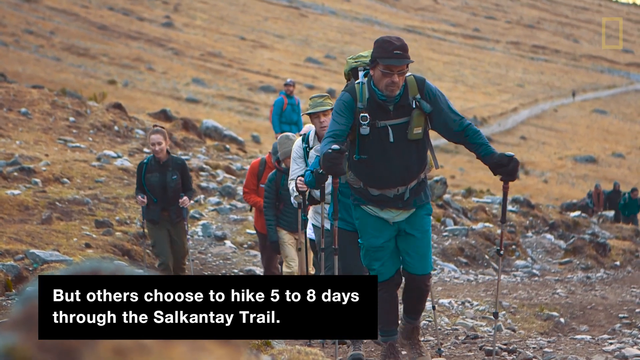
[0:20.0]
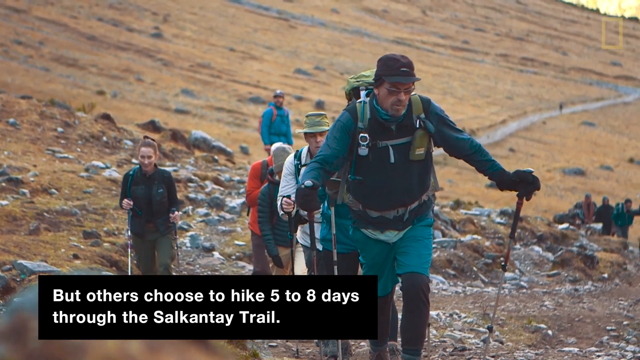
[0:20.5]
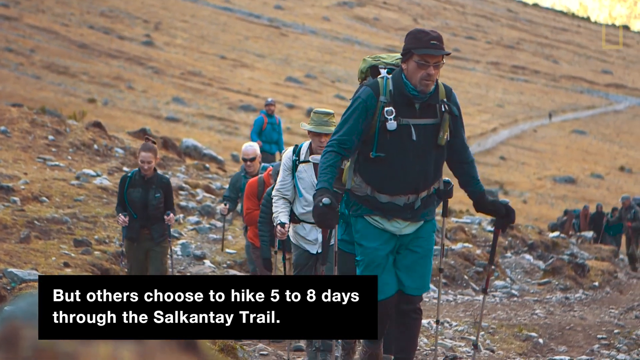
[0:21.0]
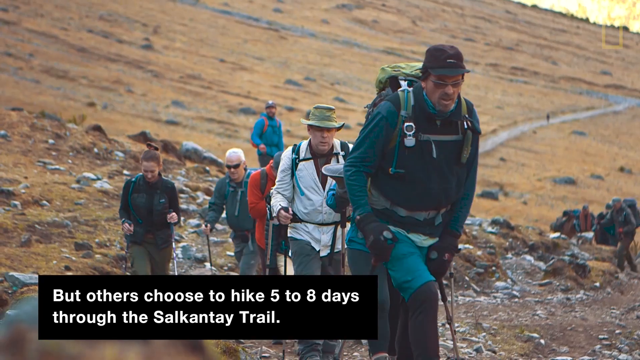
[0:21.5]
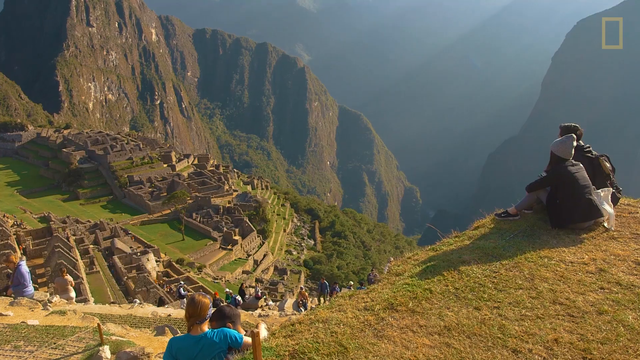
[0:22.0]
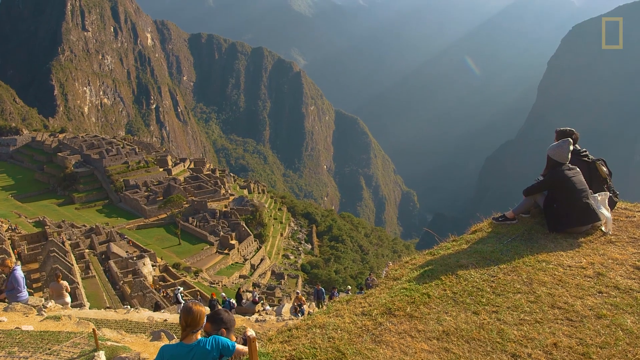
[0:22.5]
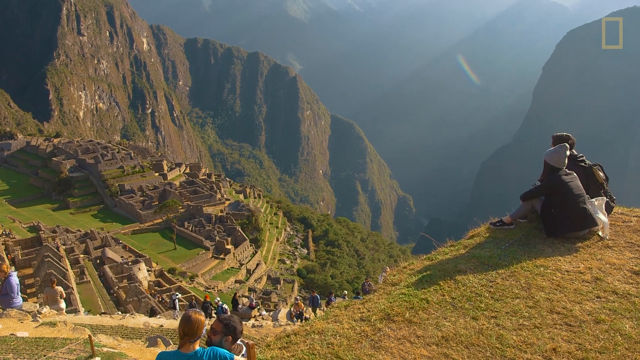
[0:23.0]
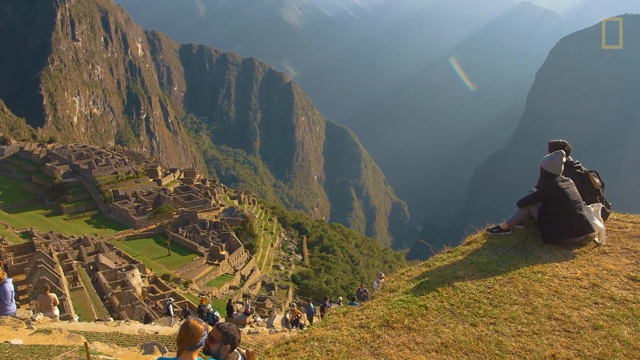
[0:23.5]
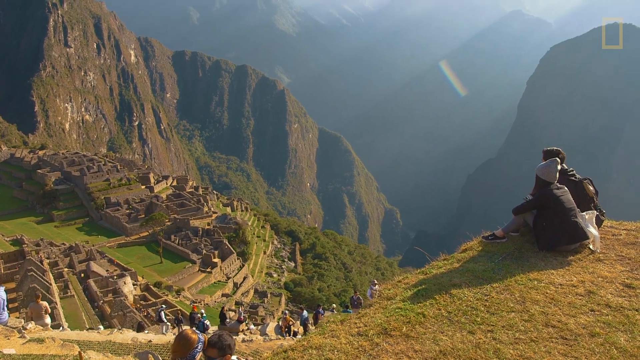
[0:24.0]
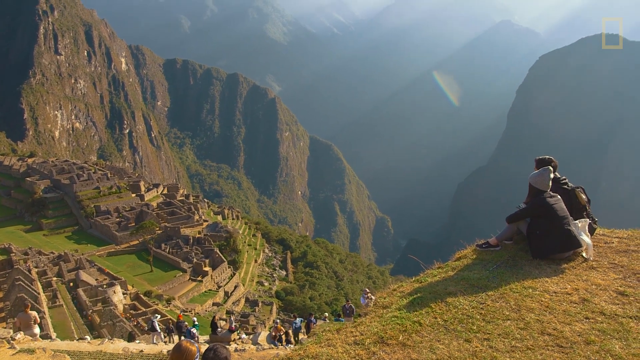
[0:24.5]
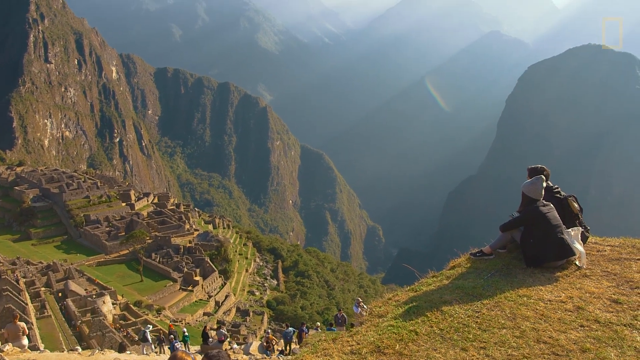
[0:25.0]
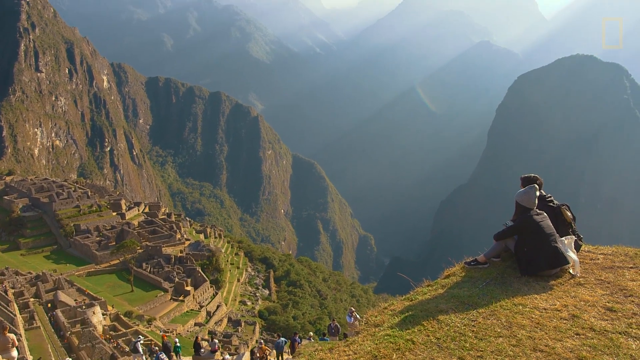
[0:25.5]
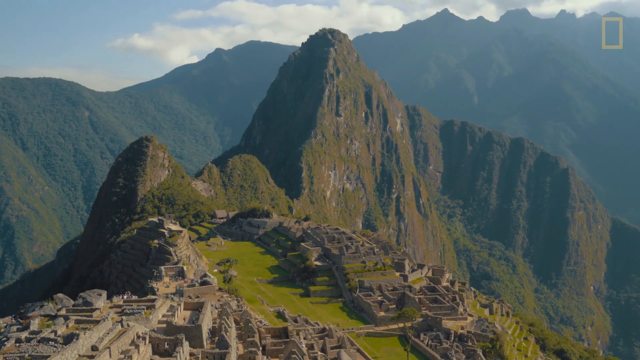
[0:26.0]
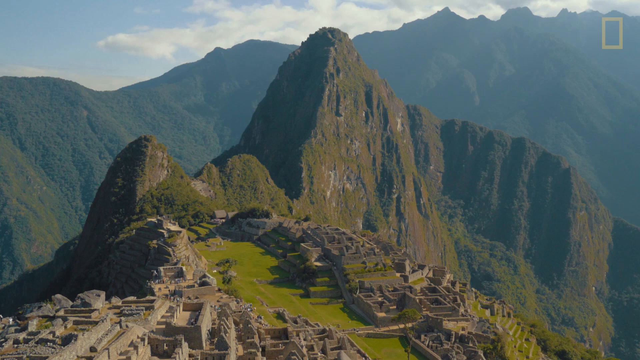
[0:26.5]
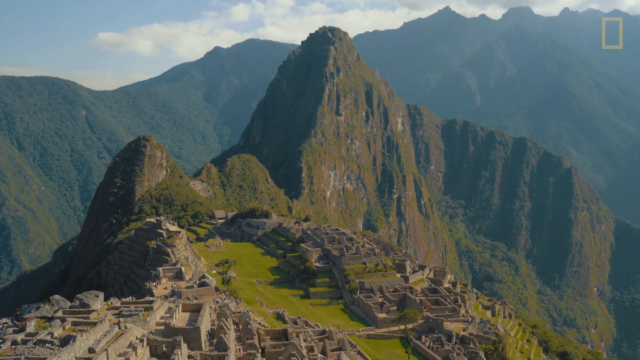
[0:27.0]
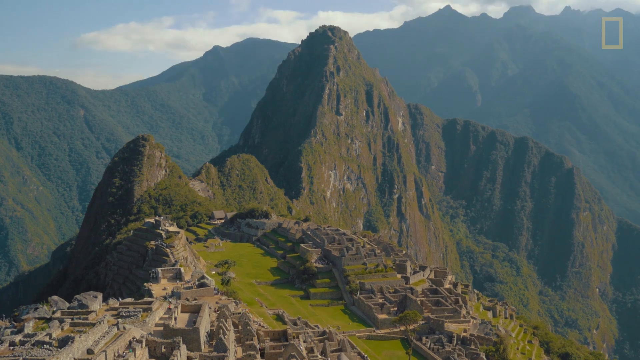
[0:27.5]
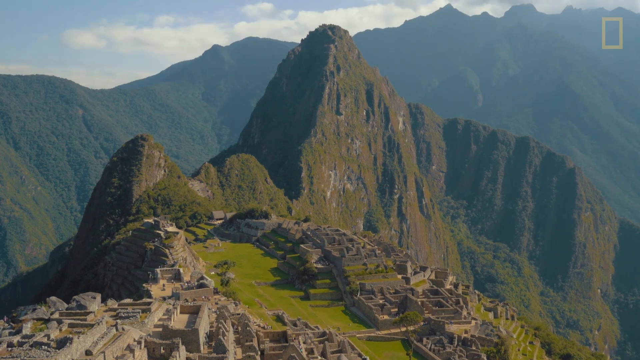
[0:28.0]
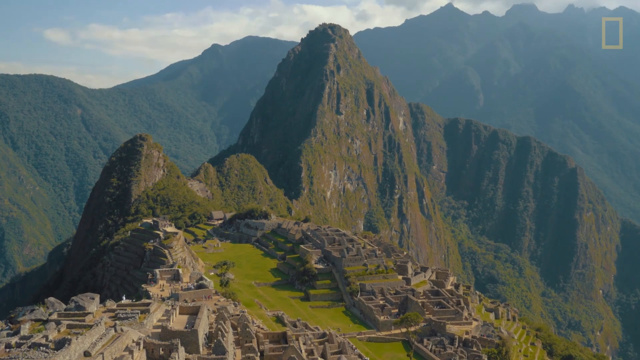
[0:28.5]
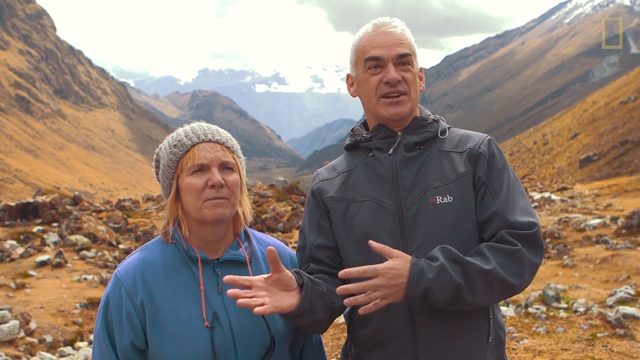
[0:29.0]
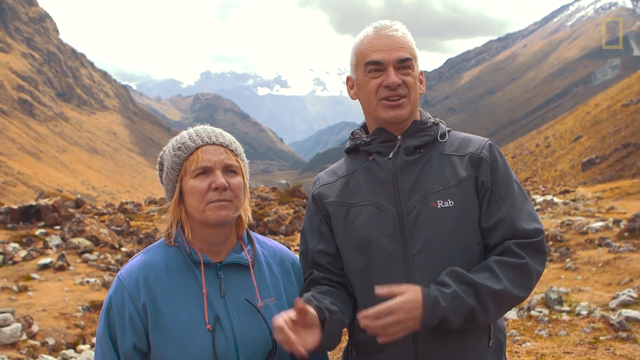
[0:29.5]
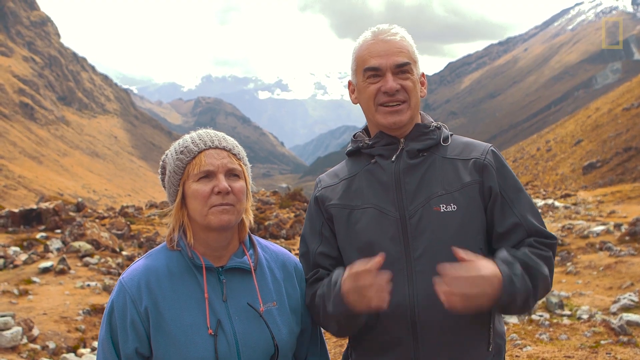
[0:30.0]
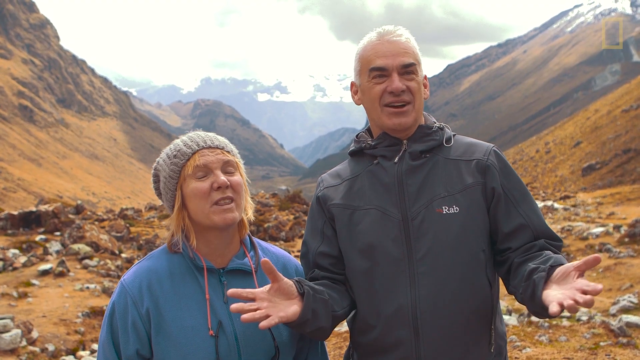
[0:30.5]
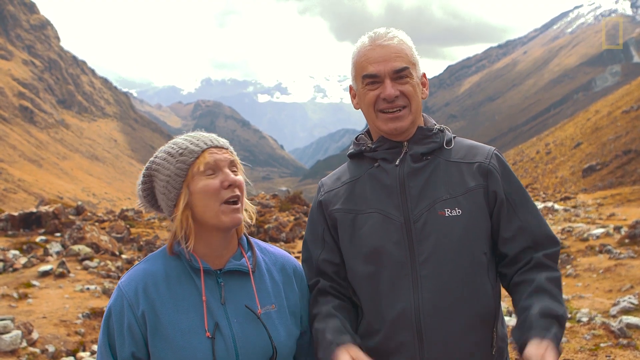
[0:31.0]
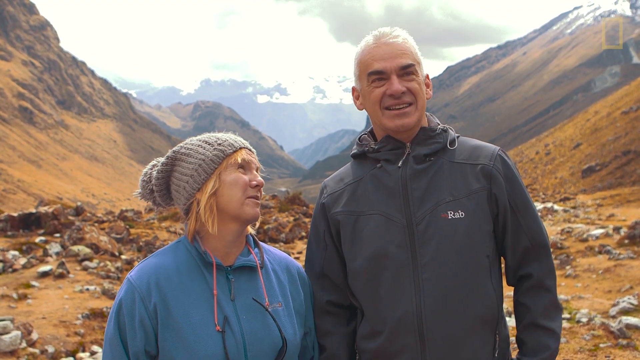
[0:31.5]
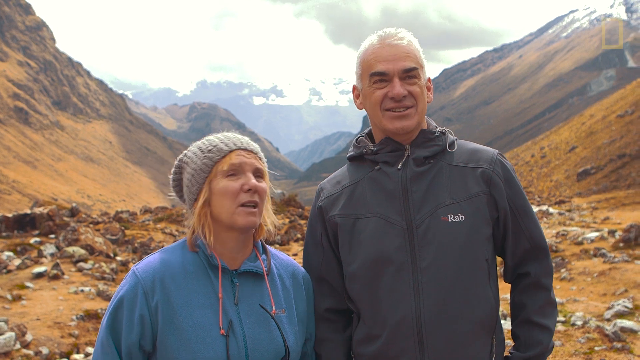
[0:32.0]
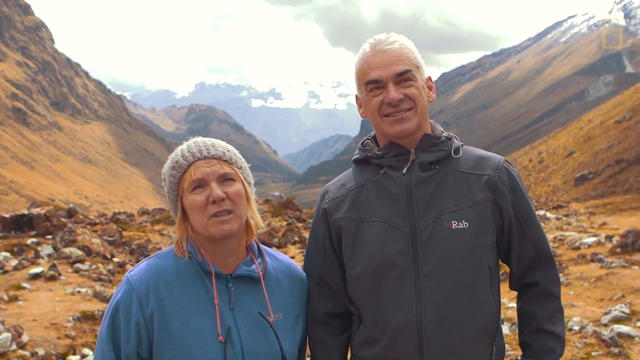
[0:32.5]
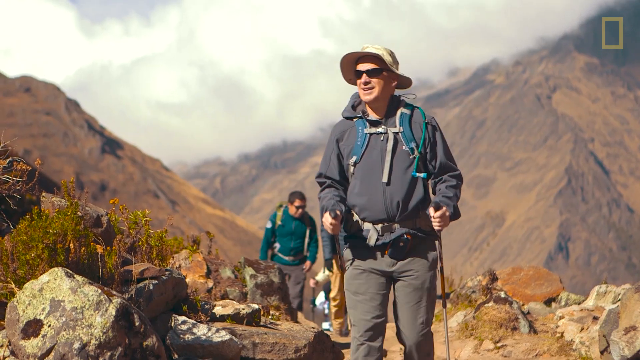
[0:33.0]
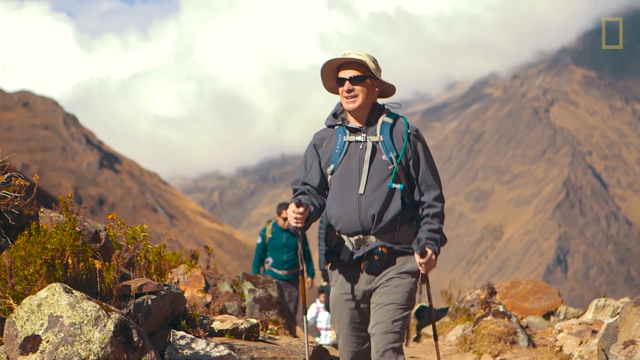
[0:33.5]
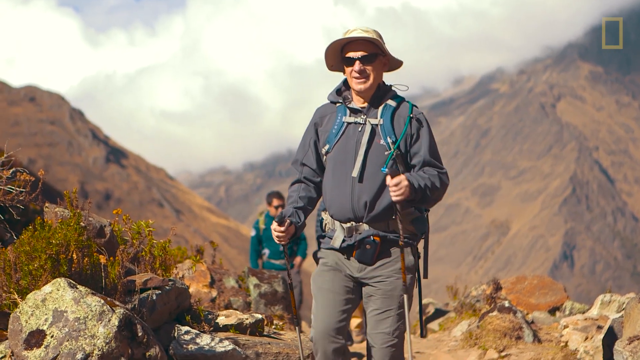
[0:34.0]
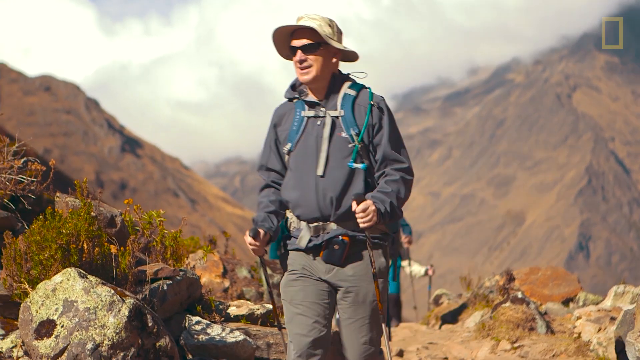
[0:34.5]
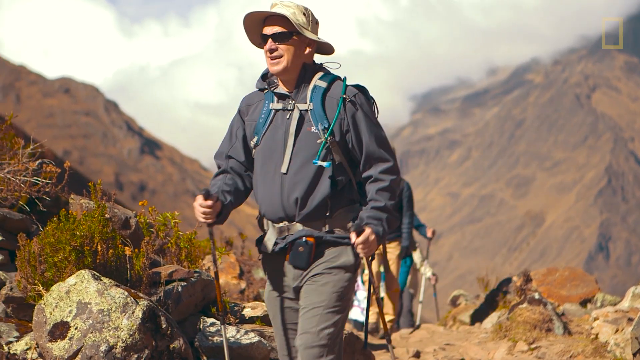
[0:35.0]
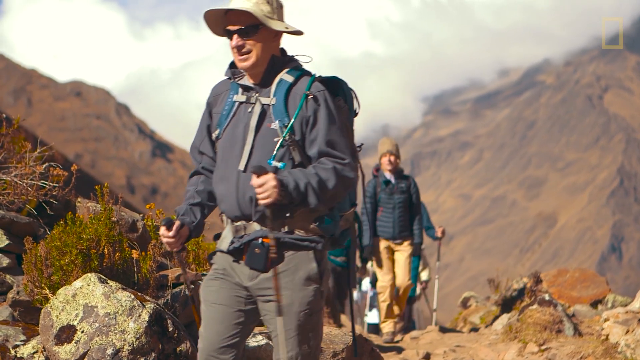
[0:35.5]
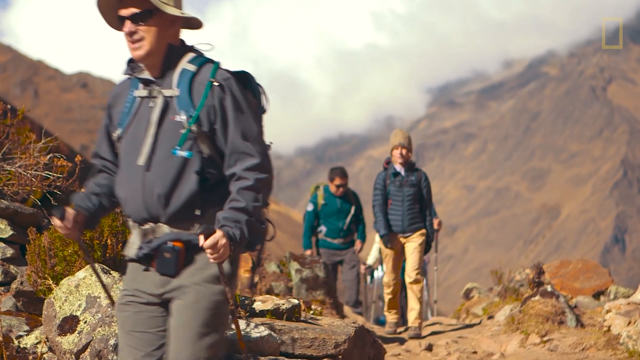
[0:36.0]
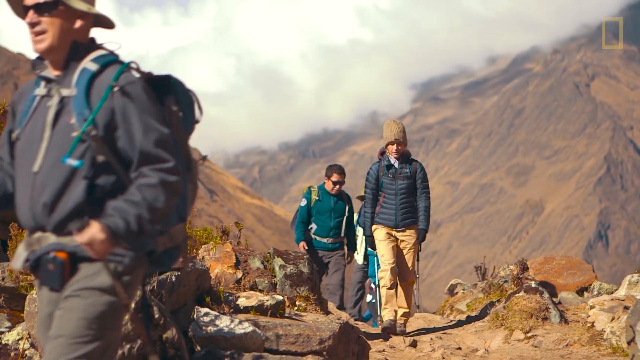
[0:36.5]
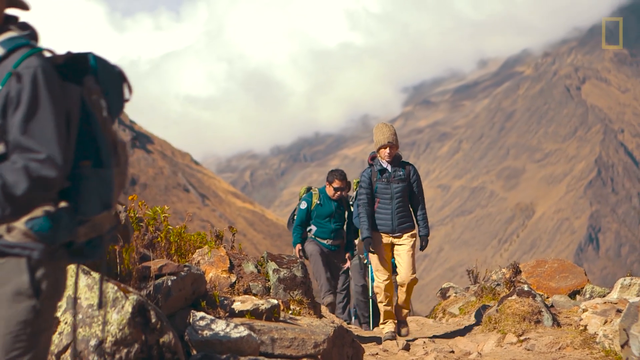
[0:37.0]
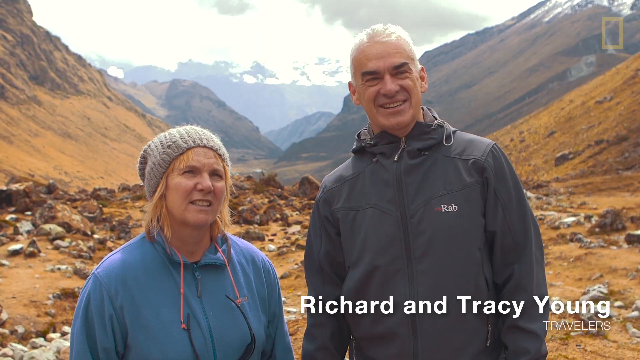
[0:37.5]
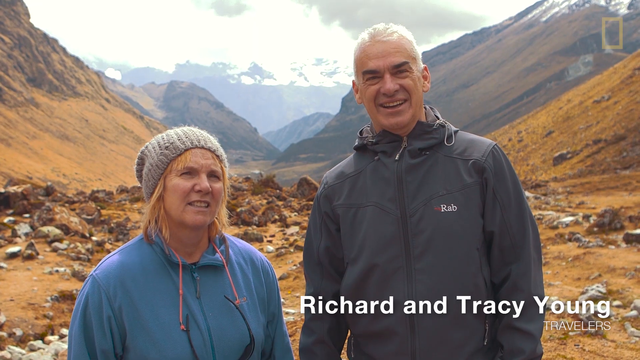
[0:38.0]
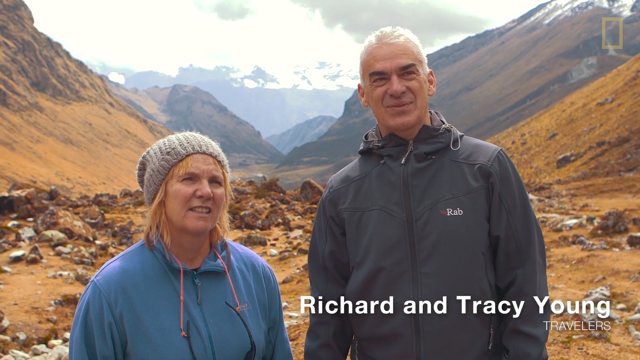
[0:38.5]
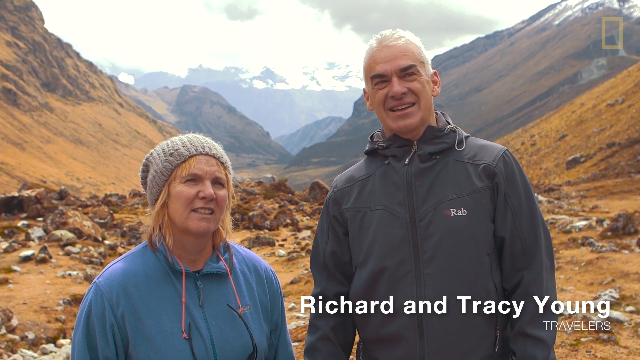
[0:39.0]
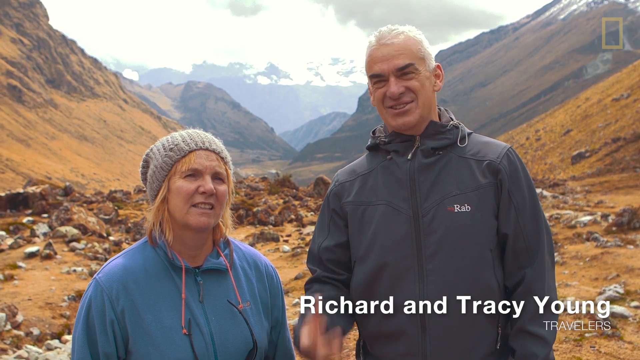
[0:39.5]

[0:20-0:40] Hikers continue climbing up the pathway, wearing jackets and hats and carrying steadying poles and backpacks; most of them wear sunglasses, and there are some clouds. An overview of Machu Picchu follows: green terraces on a little plateau high up, a stone monolith sticking up, valleys dropping away steeply, deep gorges around the site, and snow-covered mountains of the Andes in the distance. A close-up then shows a pair of travelers, Richard and Tracy Young, an older, gray-haired couple, middle-aged or a little older. Both wear coats and sweatshirts, and she wears a hat. They stand with their backs to some mountains, with a lot of browns and golds in the background, clouds, and the snow-capped Andes behind them.